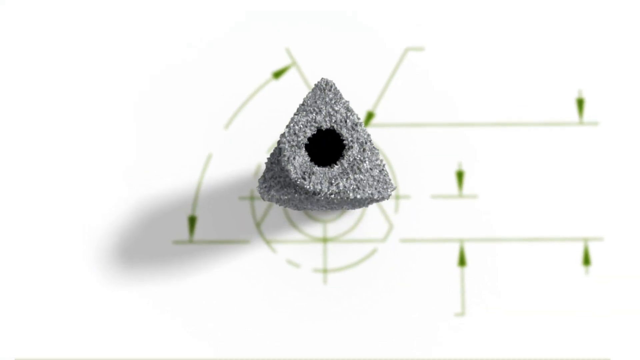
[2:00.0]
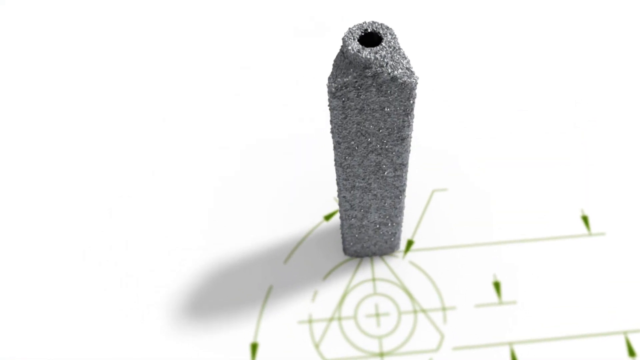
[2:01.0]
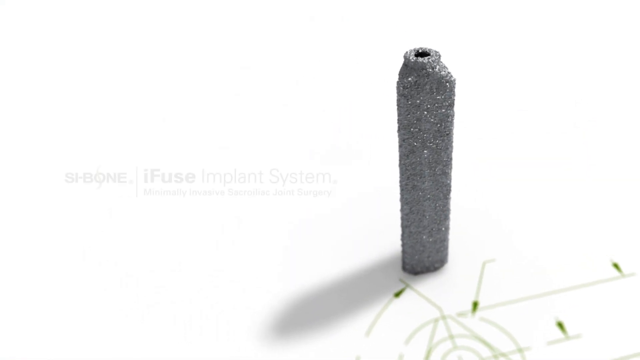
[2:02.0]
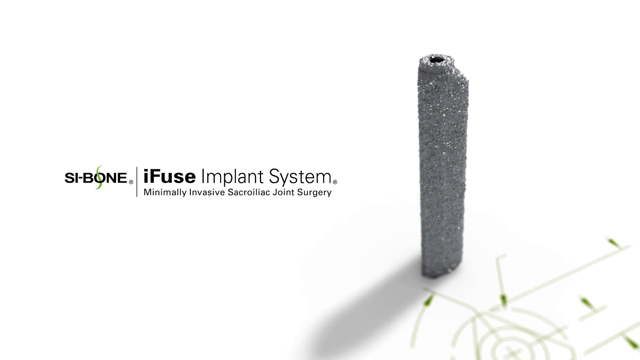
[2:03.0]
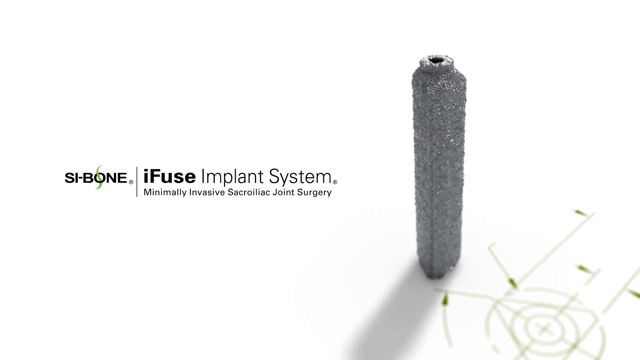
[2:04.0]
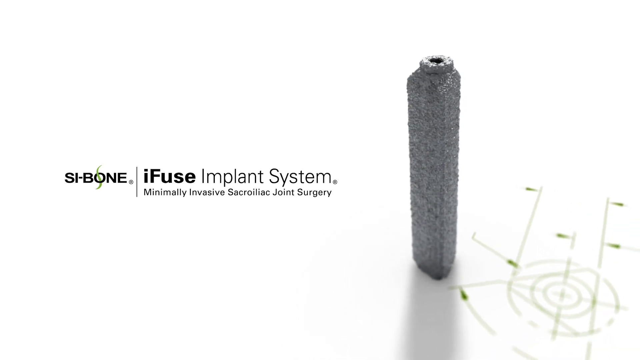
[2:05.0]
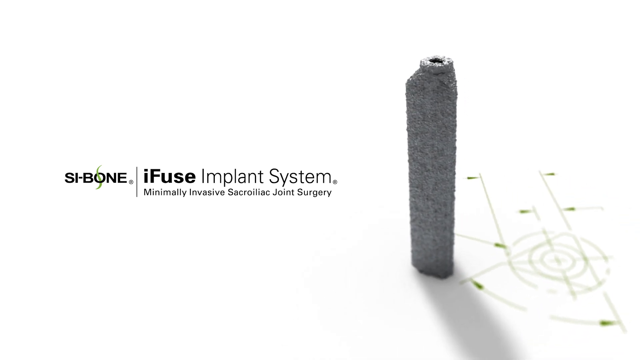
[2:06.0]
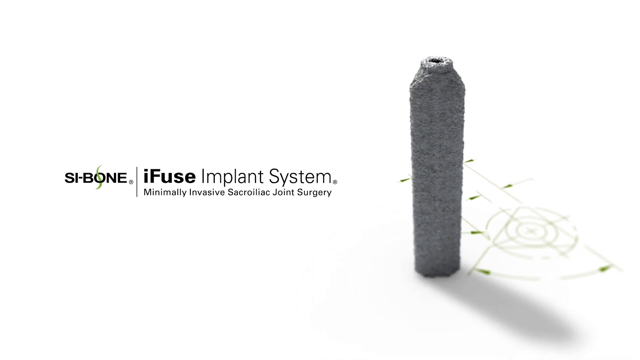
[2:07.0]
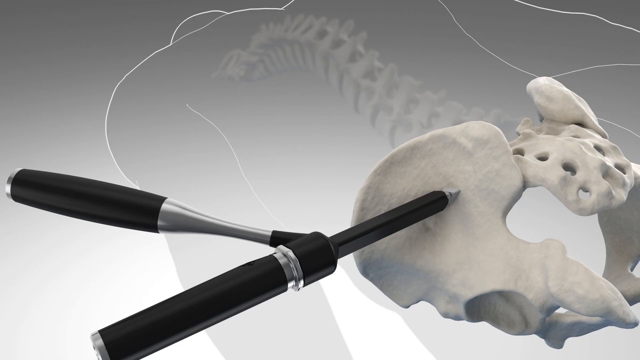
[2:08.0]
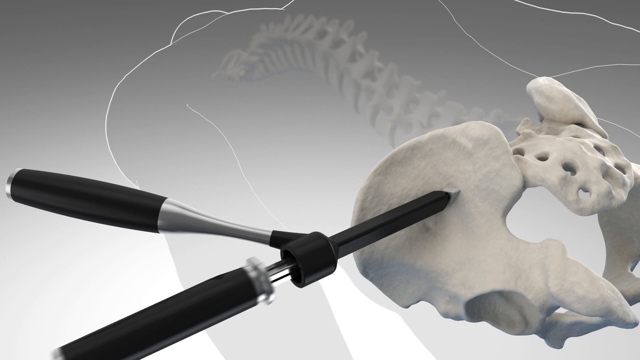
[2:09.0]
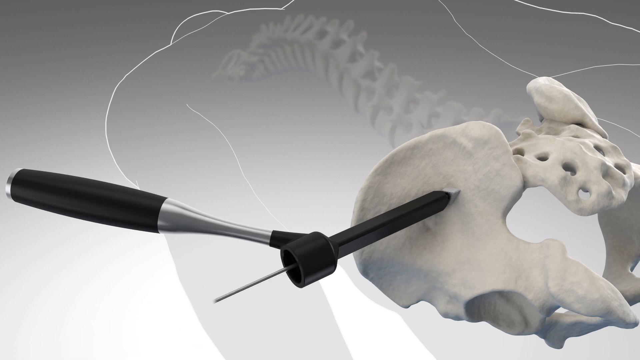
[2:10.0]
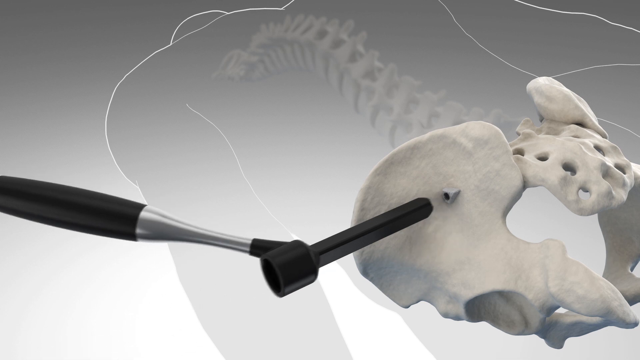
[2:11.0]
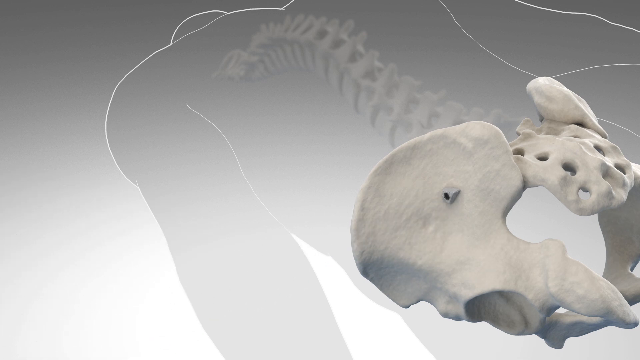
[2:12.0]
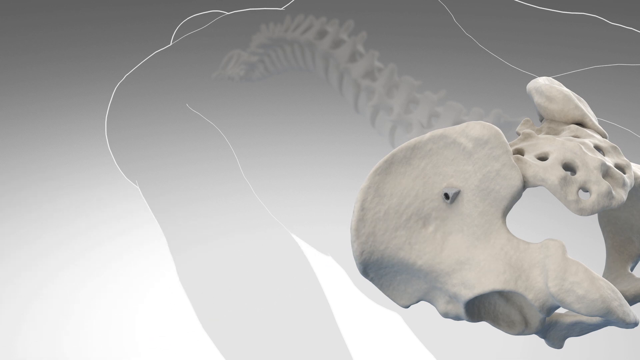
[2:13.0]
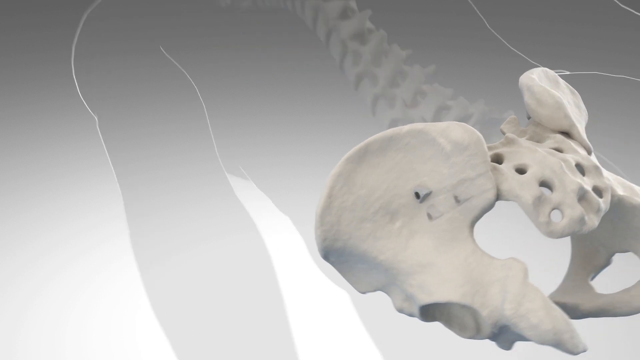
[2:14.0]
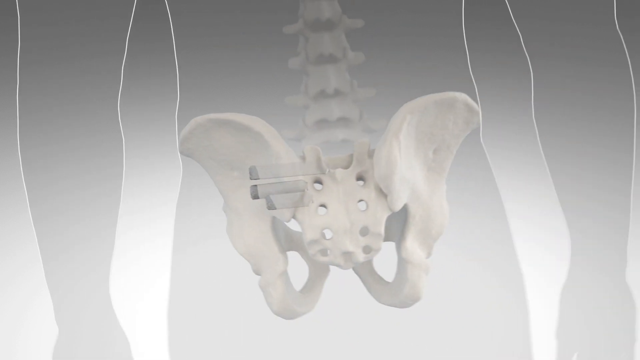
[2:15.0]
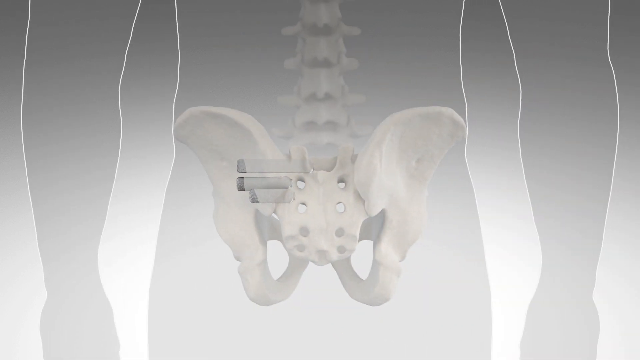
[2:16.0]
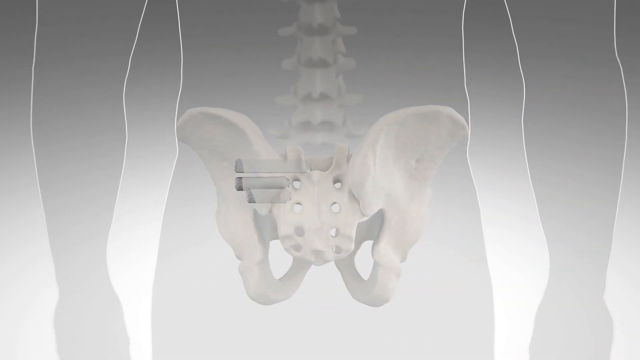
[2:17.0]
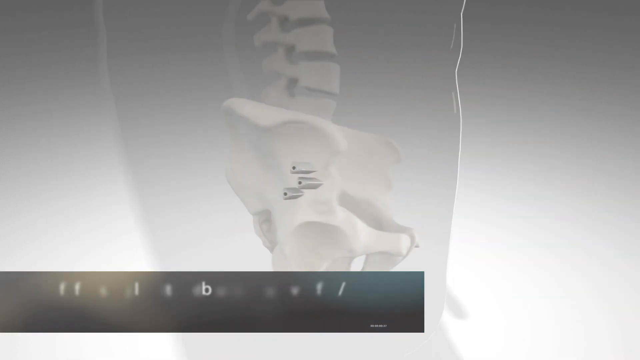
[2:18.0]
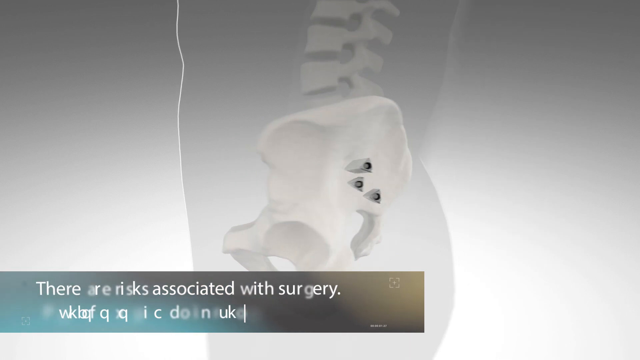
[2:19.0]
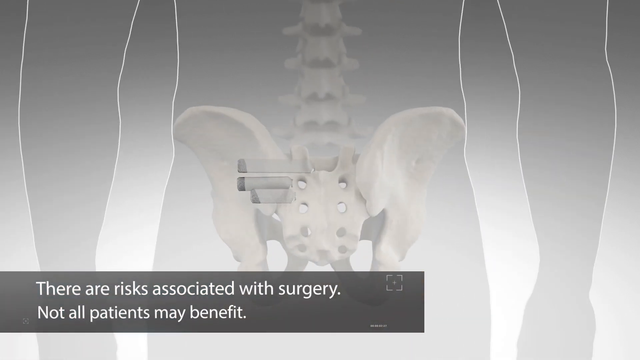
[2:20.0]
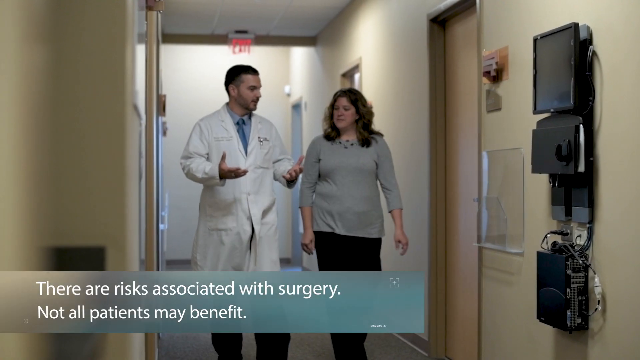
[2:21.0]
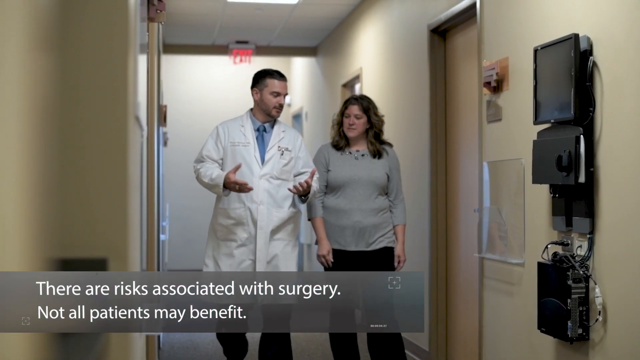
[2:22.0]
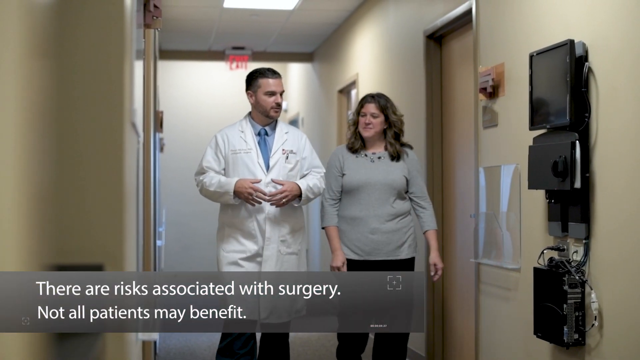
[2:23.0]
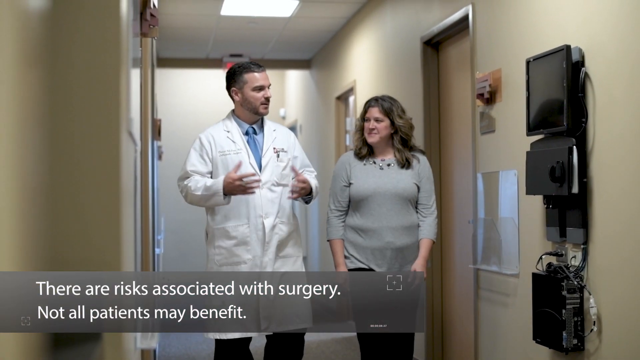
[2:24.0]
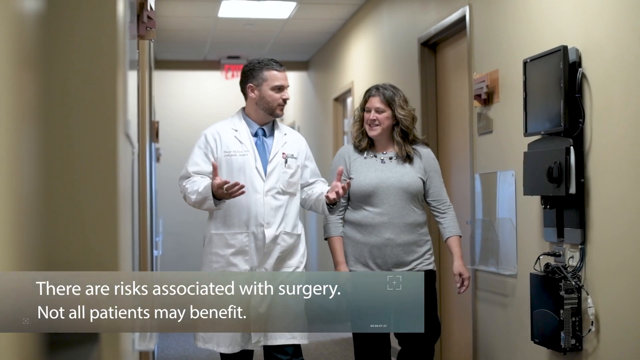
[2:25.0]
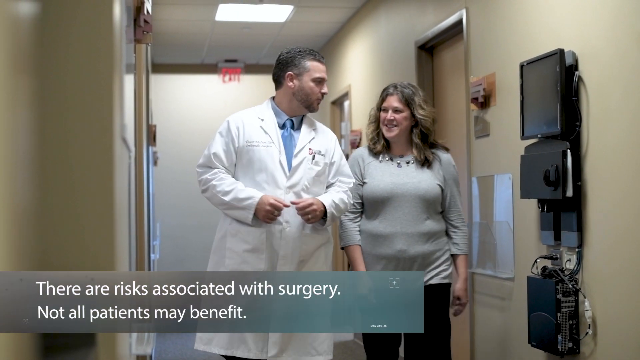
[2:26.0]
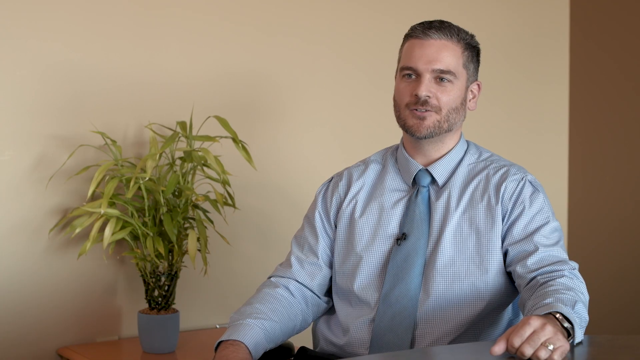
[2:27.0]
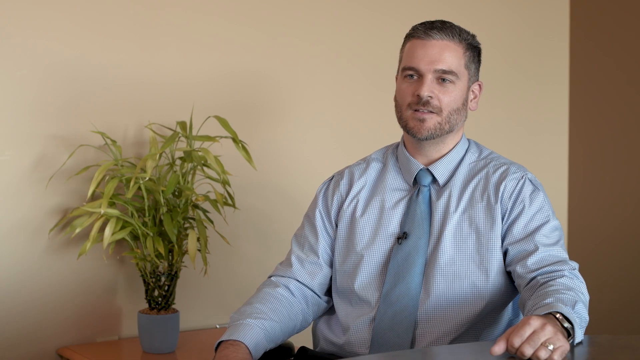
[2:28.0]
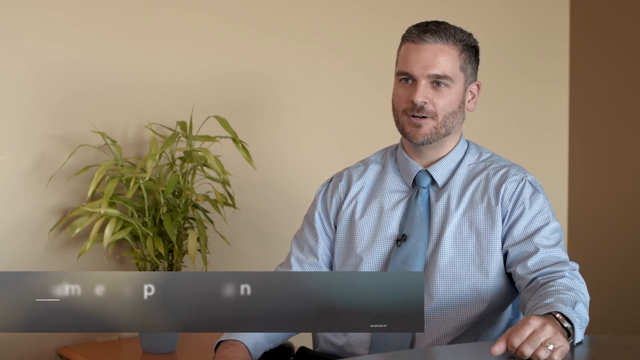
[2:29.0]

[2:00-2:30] A grayish triangle with a black circle in the middle appears on an all-white background, with green arrows going in different directions, including one pointing down on the right side and one pointing up. The view then shifts to the side, where it looks like a pole. To the left, in black, text reads "SI-BONE", followed by a vertical line, and on the right side "iFuse implant system", with "minimally invasive" underneath followed by a word beginning "sacro", possibly "sacroiliac", and "joint surgery".